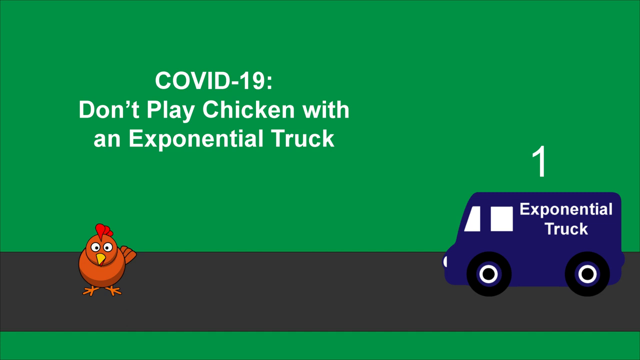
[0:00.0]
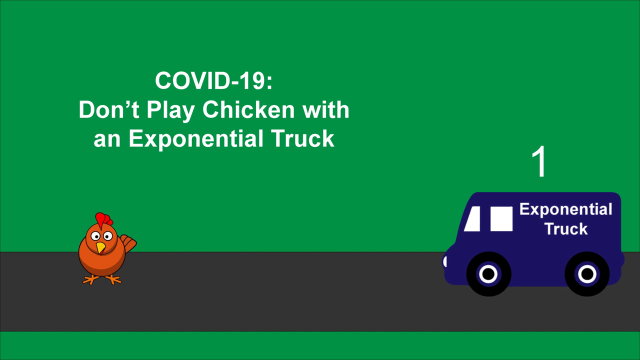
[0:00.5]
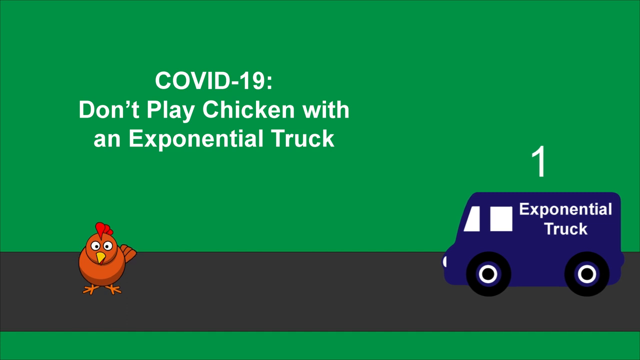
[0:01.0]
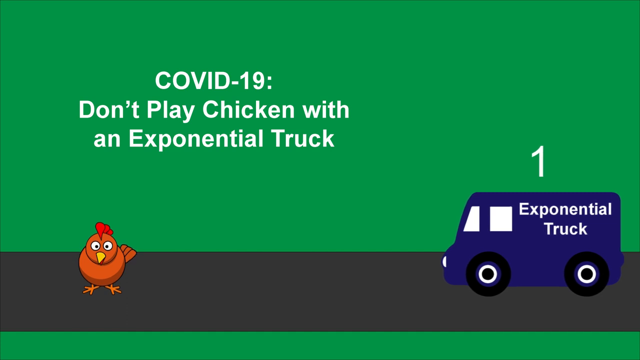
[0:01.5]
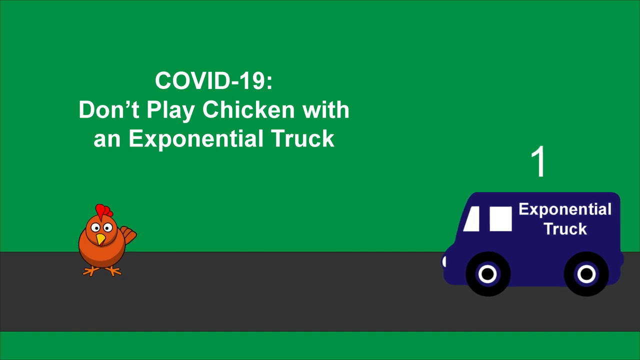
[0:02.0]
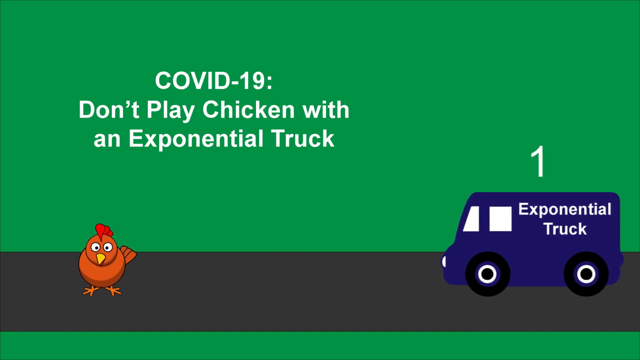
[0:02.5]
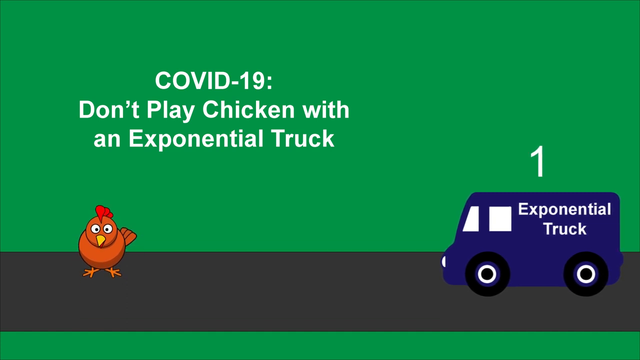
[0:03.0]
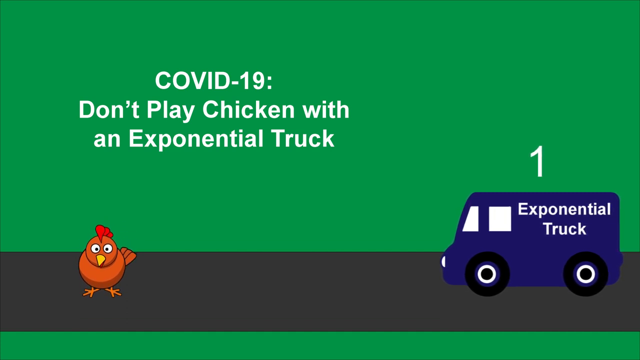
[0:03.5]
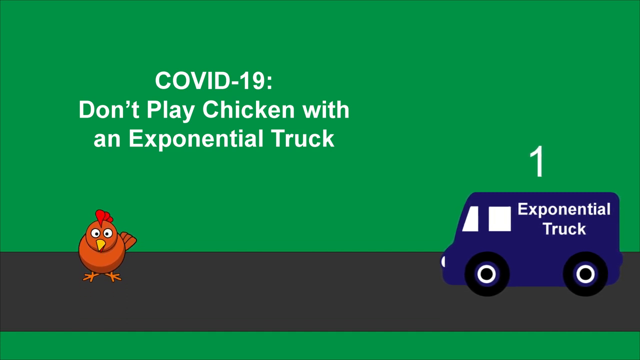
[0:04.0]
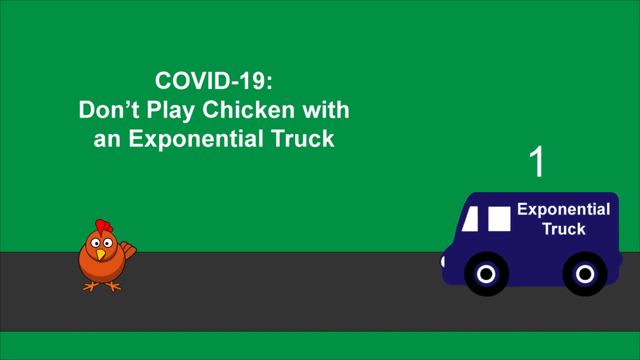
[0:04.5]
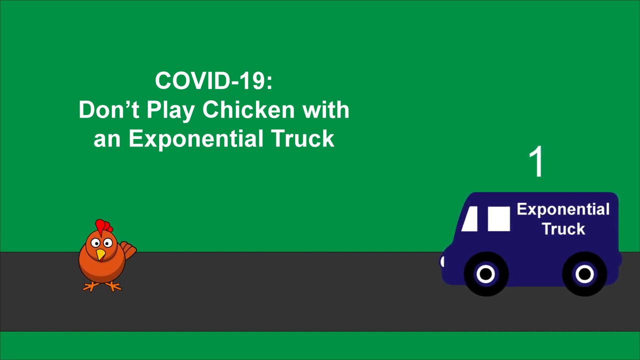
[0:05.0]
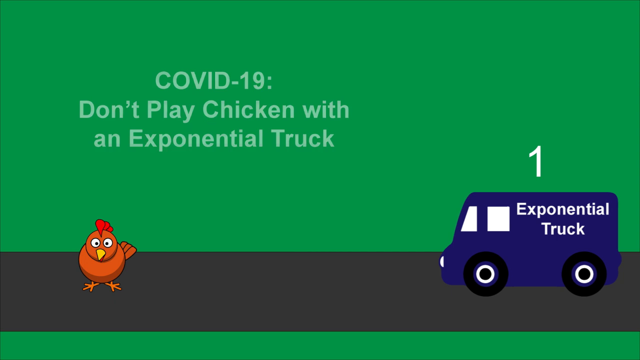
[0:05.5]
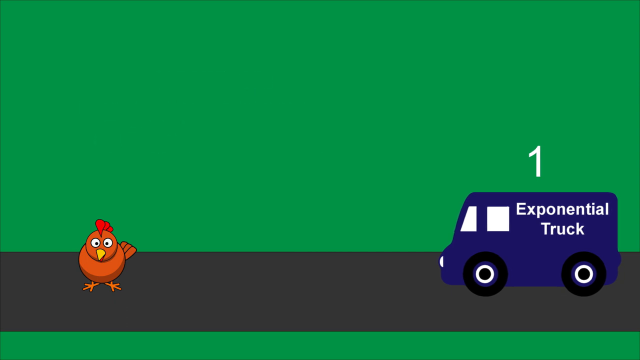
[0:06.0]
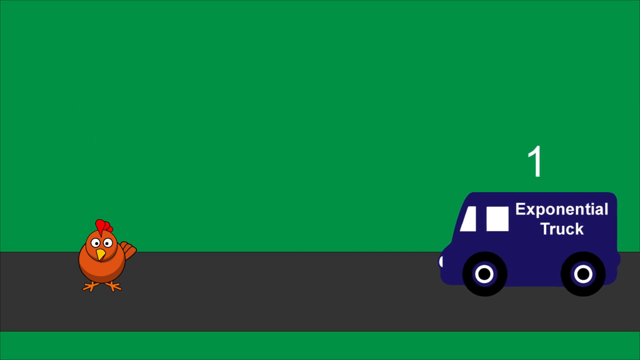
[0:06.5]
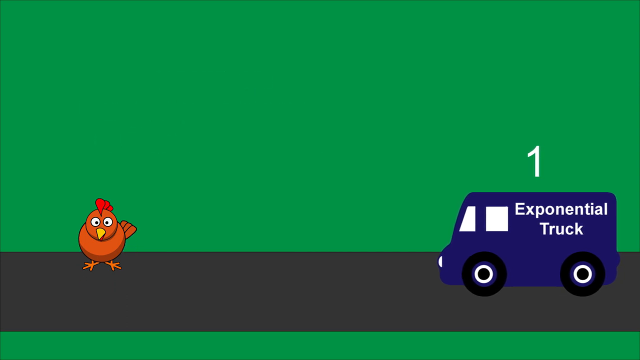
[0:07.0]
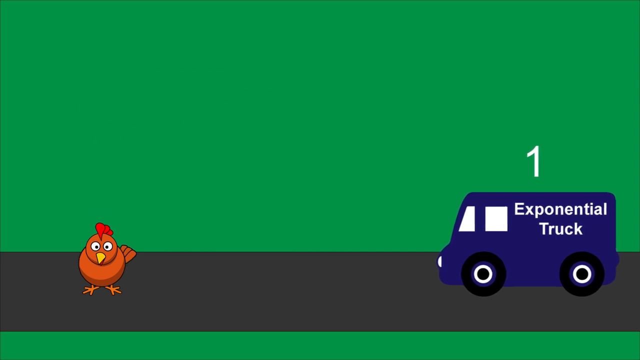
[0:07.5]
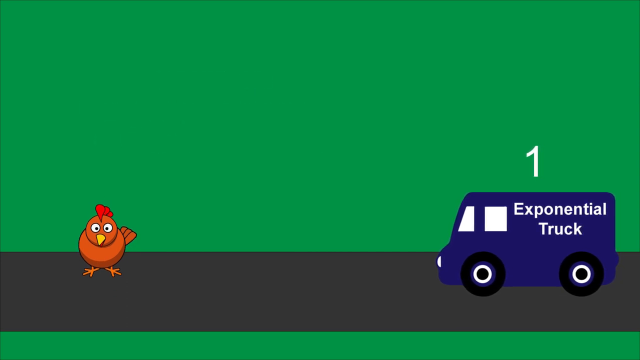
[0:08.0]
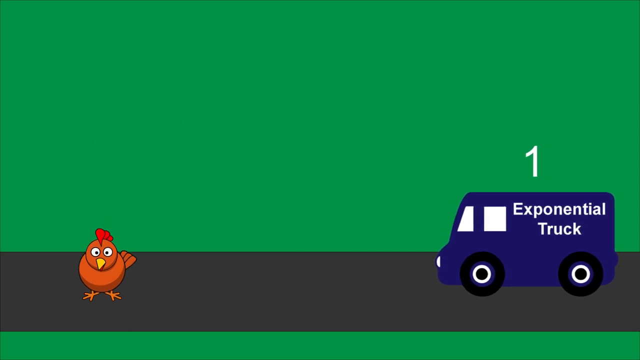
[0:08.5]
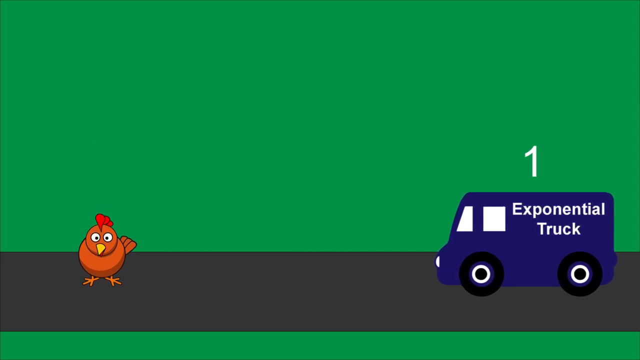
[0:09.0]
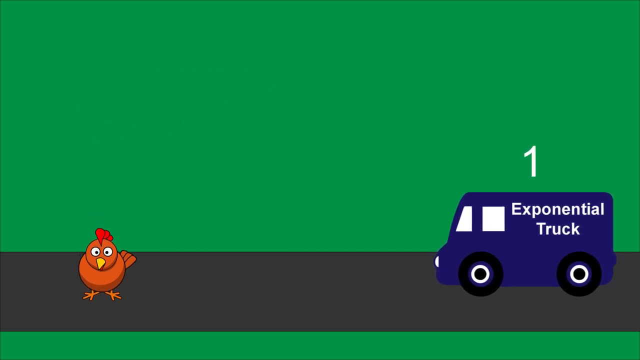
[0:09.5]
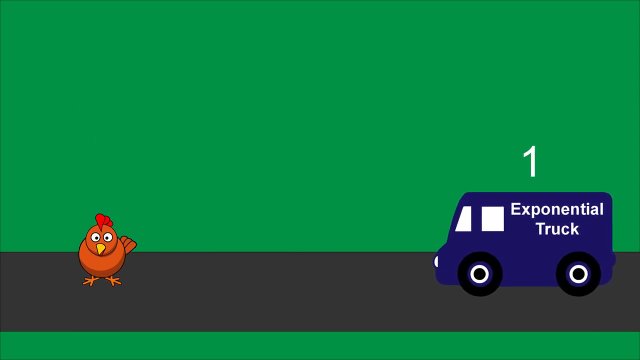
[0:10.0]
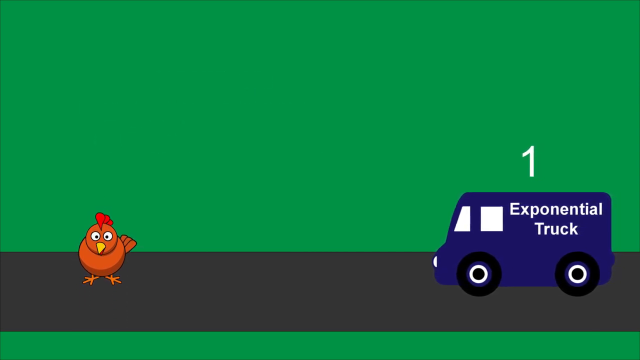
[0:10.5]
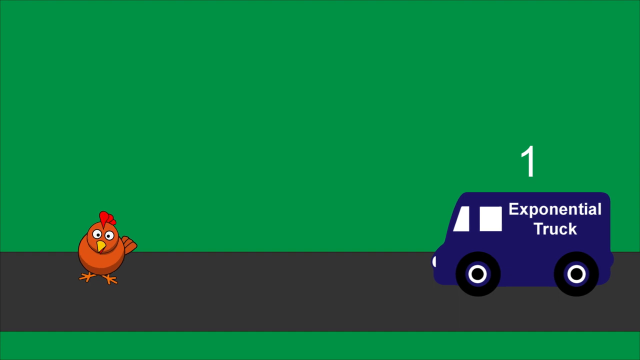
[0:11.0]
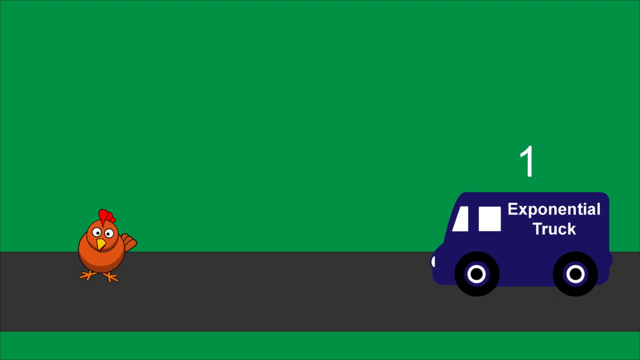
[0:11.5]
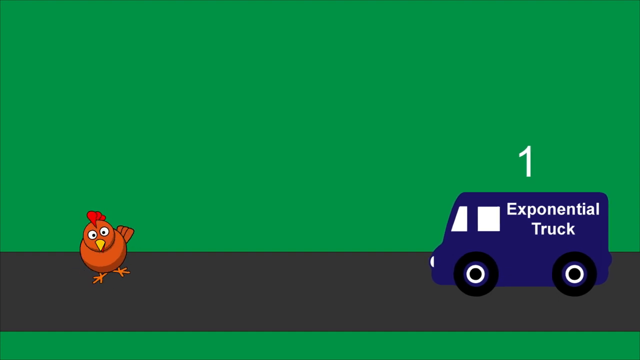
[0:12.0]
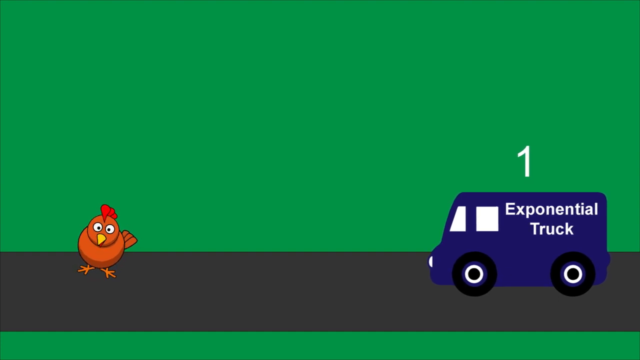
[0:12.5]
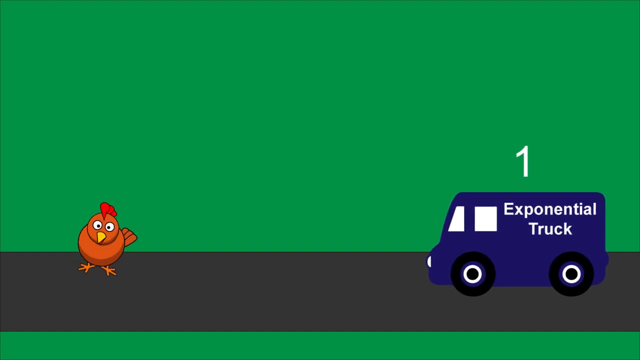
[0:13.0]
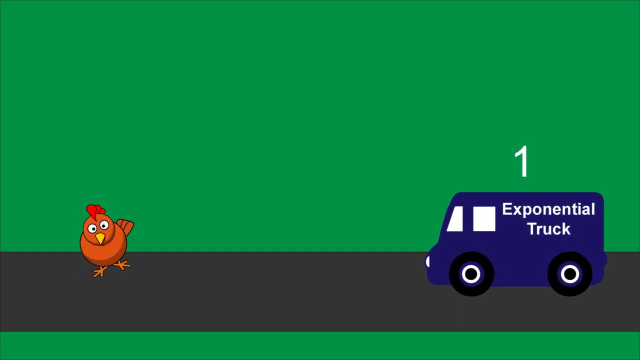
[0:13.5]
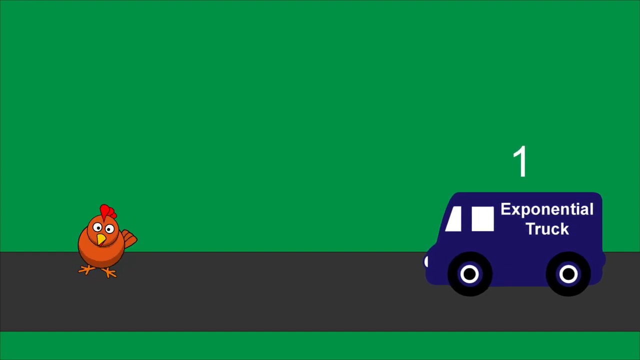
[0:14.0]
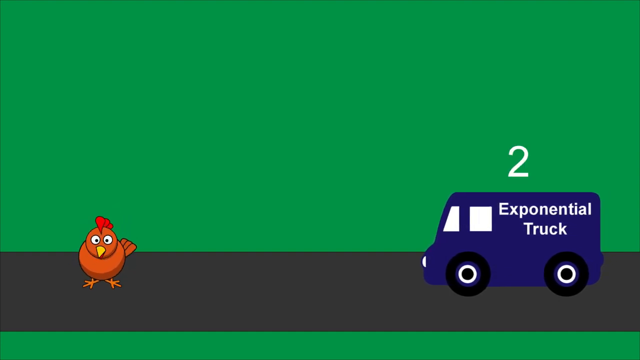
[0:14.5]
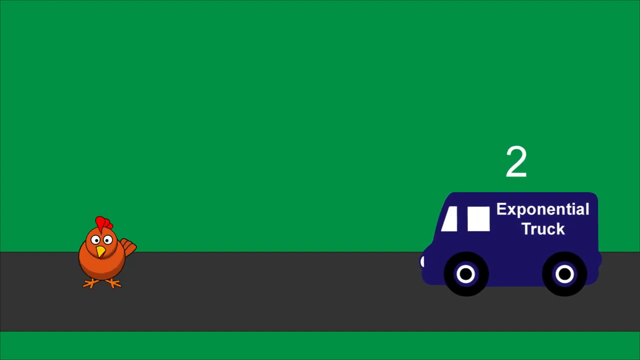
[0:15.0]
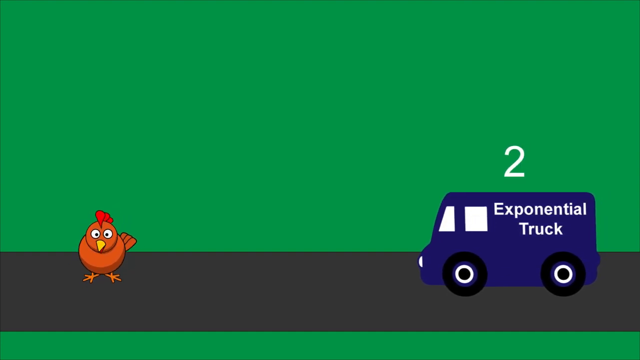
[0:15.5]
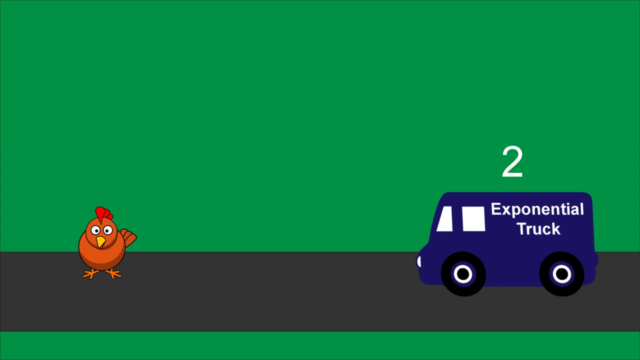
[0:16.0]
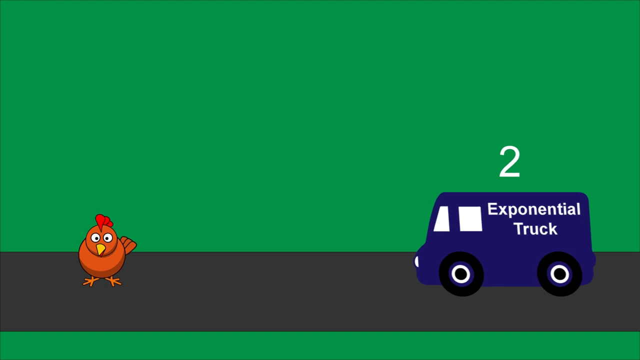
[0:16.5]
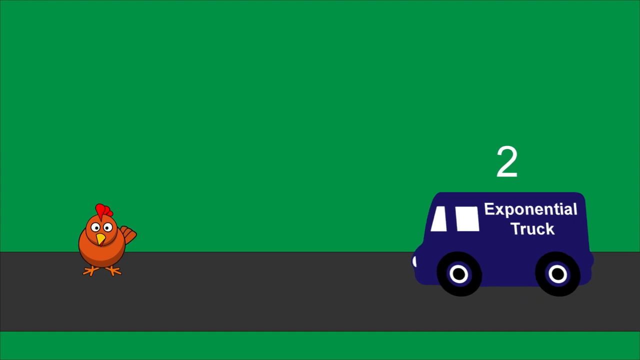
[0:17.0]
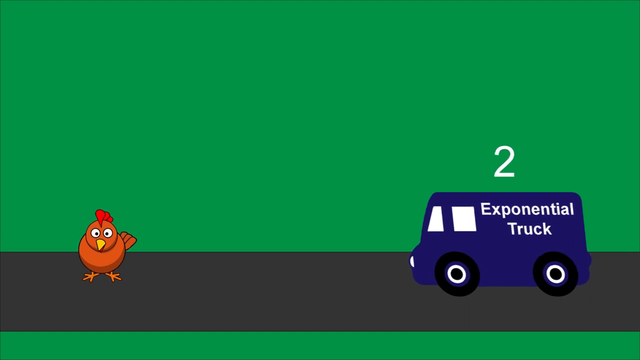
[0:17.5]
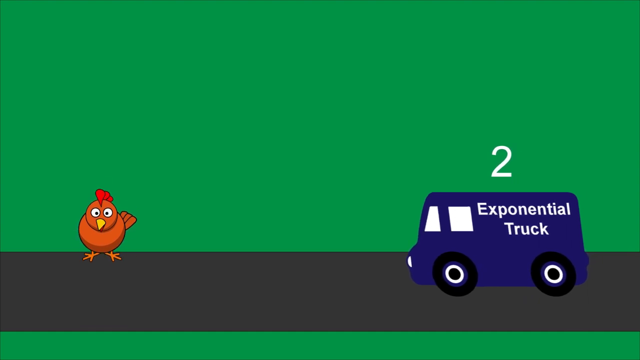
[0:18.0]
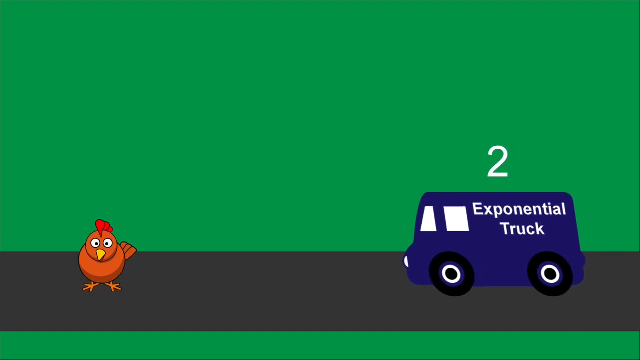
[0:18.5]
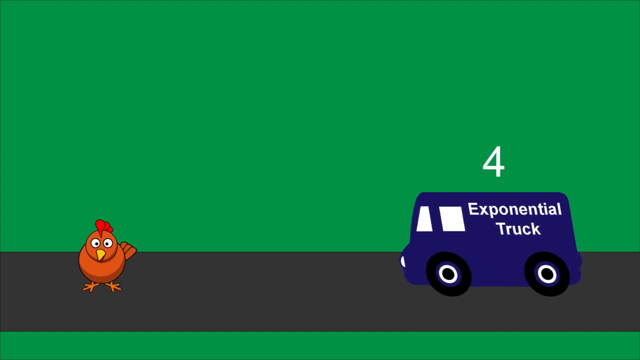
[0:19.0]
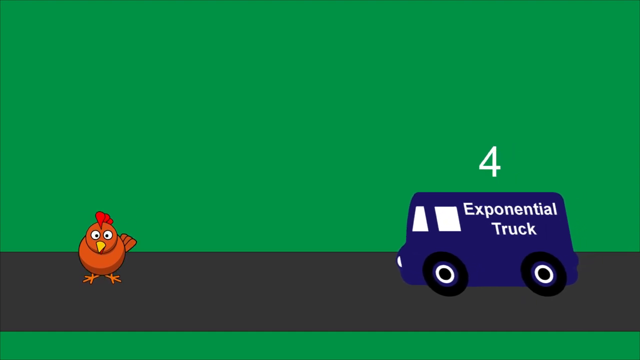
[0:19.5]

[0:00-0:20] About three quarters of the background is green and a quarter is black. In the bottom left corner there is a cartoonish chicken that is brown, with a yellow nose, white eyes and red on top of its head. In the bottom right corner the number "1" is written, and there is a blue truck with two black wheels, each with a circle on it, two white windows and a white headlight. "Exponential truck" is written on the truck. At the top of the screen is written "COVID-19 don't play chicken with an exponential truck". The chicken moves up and down continuously and also shakes to the sides.